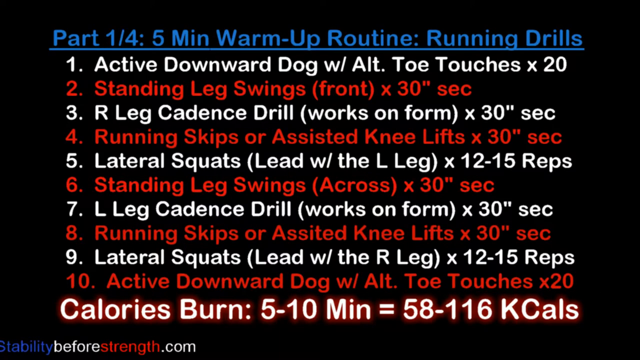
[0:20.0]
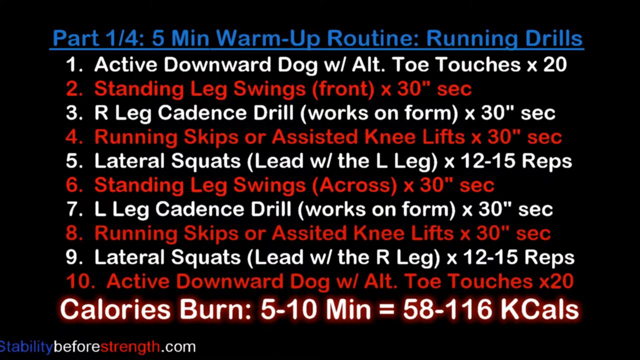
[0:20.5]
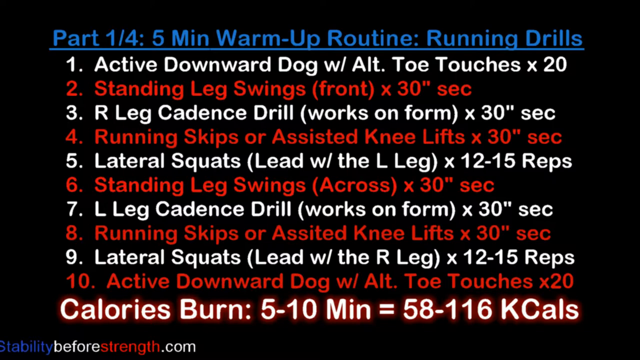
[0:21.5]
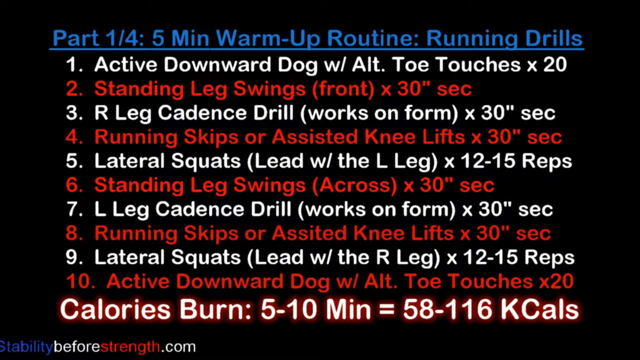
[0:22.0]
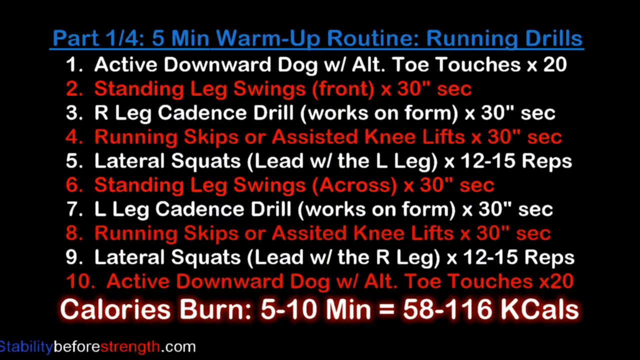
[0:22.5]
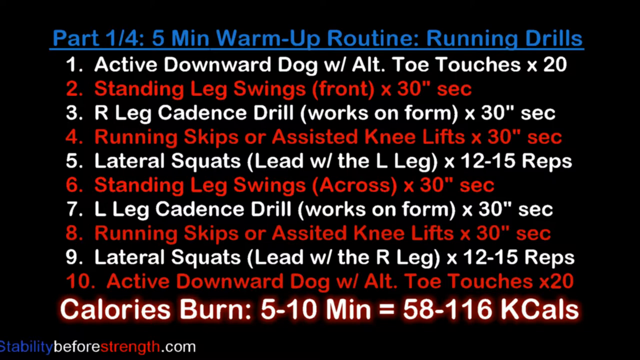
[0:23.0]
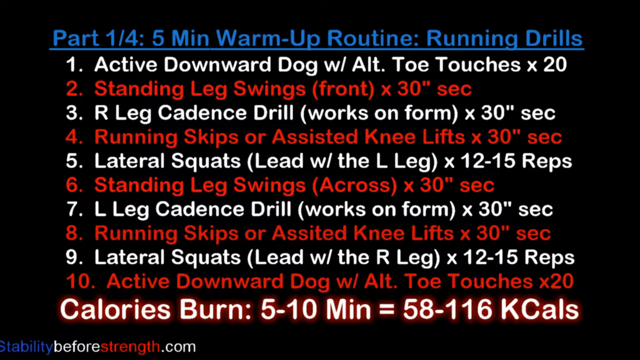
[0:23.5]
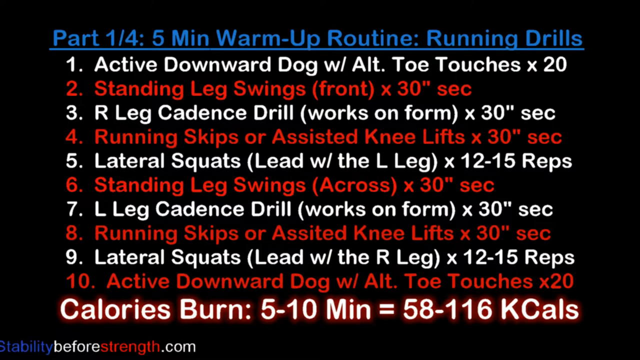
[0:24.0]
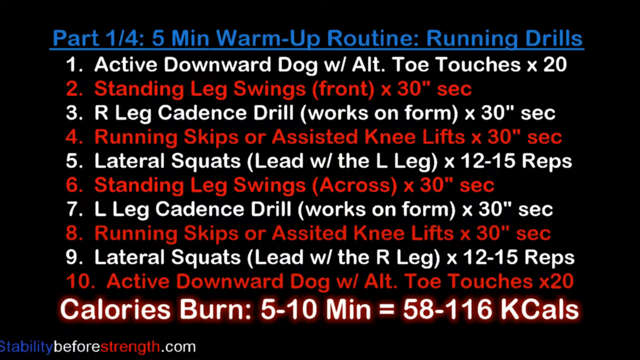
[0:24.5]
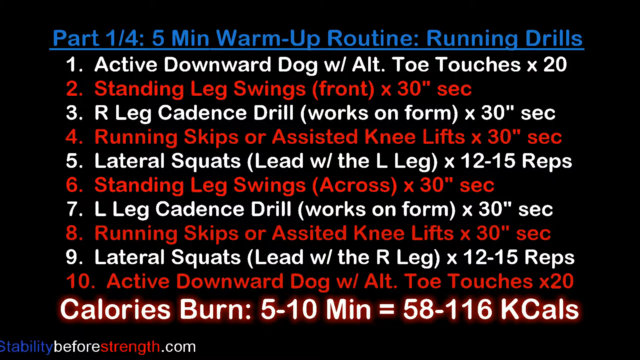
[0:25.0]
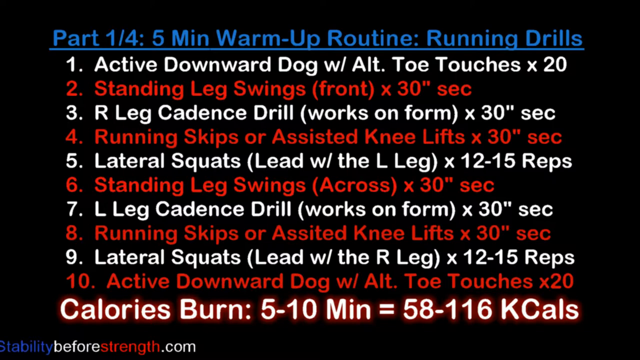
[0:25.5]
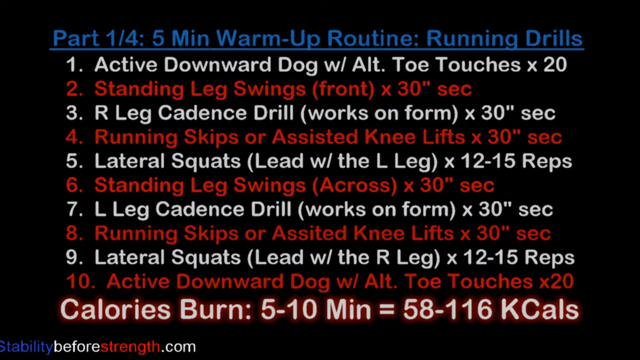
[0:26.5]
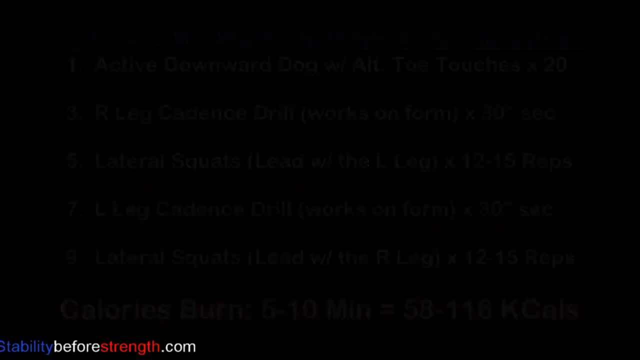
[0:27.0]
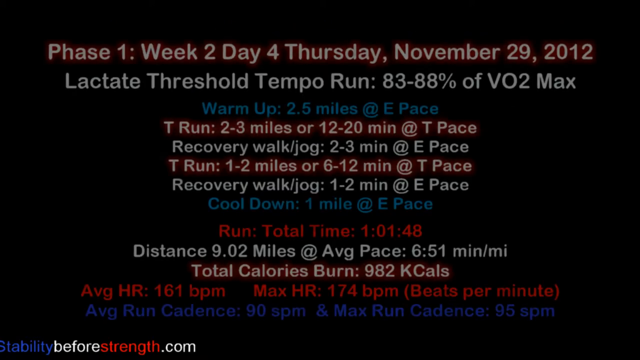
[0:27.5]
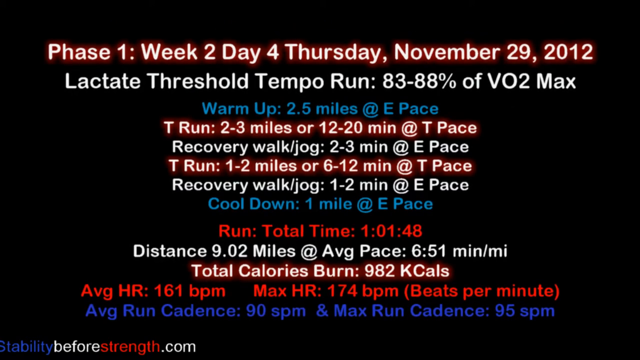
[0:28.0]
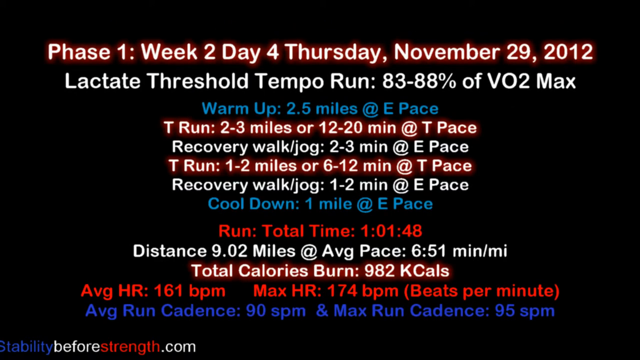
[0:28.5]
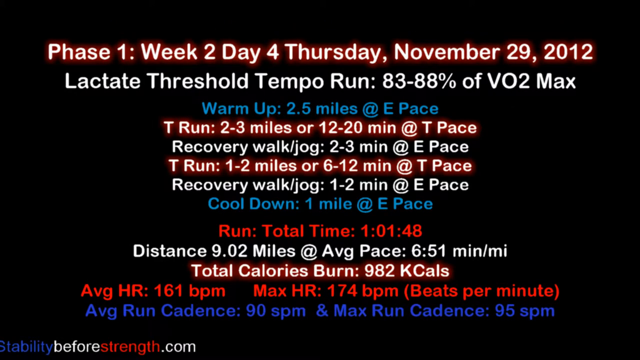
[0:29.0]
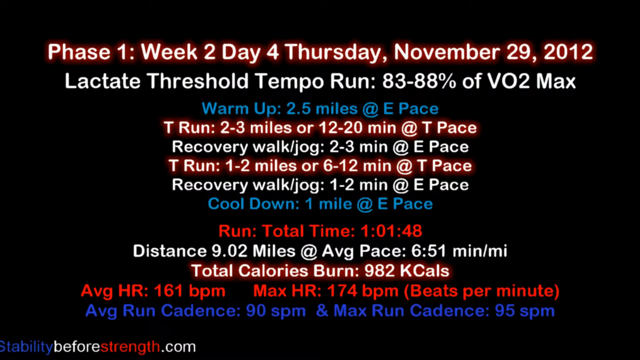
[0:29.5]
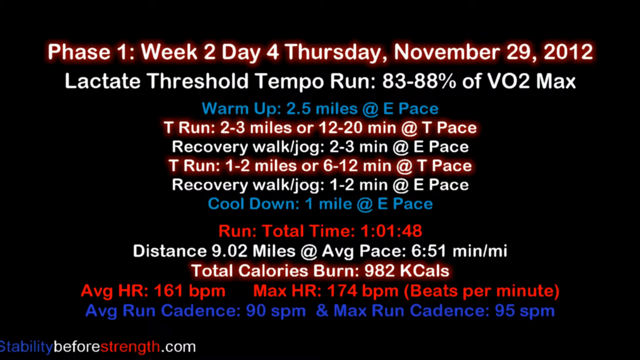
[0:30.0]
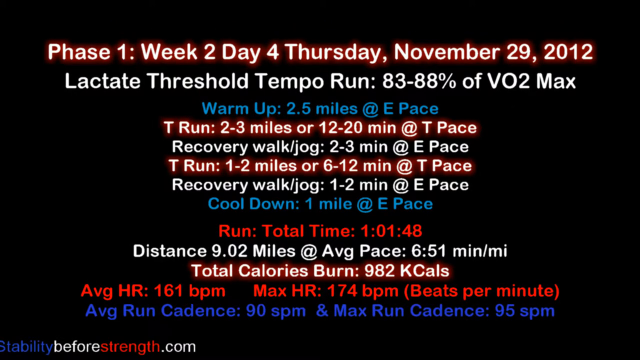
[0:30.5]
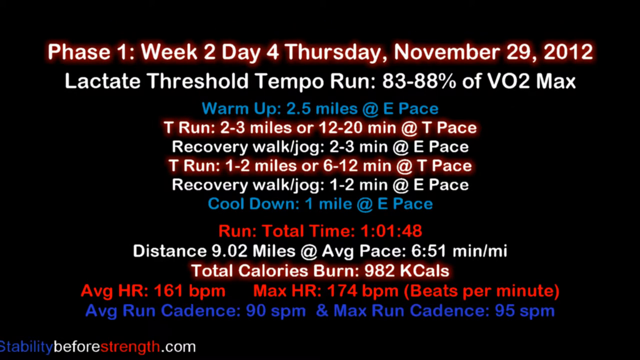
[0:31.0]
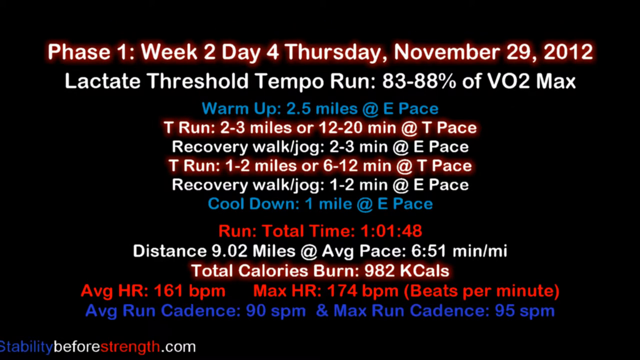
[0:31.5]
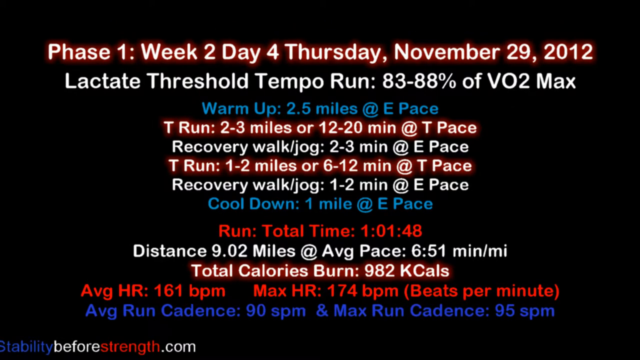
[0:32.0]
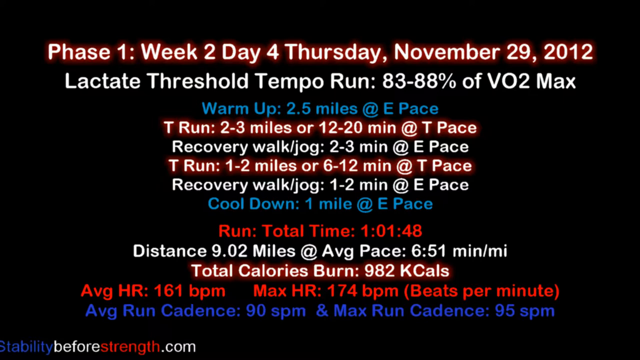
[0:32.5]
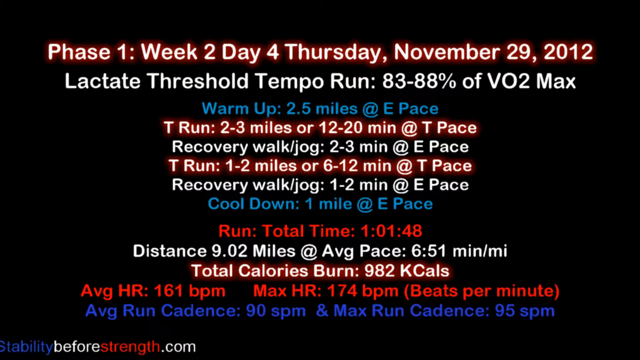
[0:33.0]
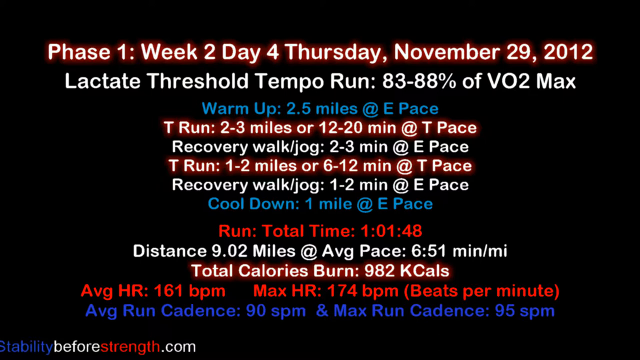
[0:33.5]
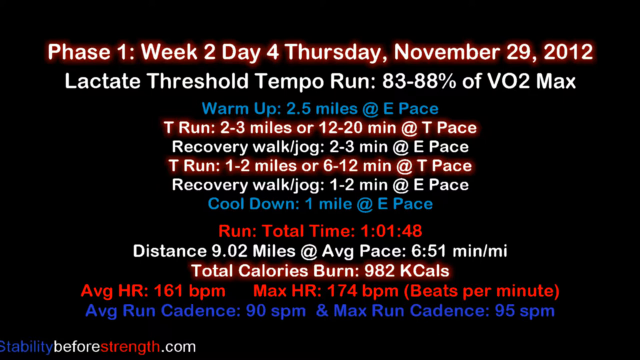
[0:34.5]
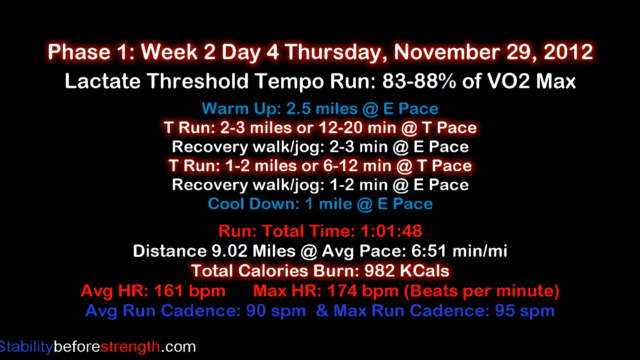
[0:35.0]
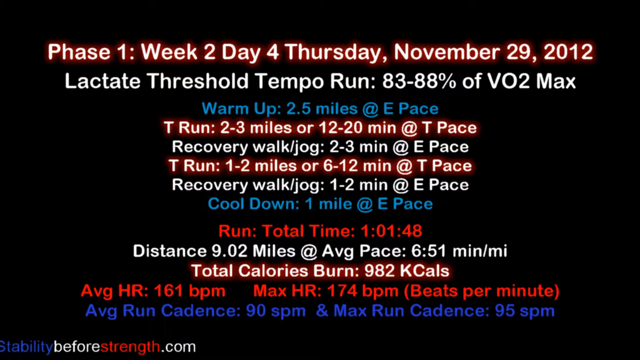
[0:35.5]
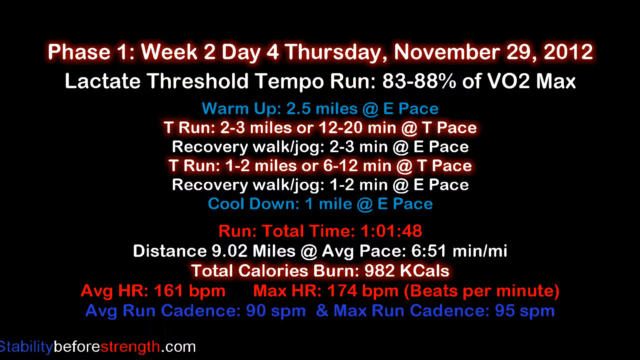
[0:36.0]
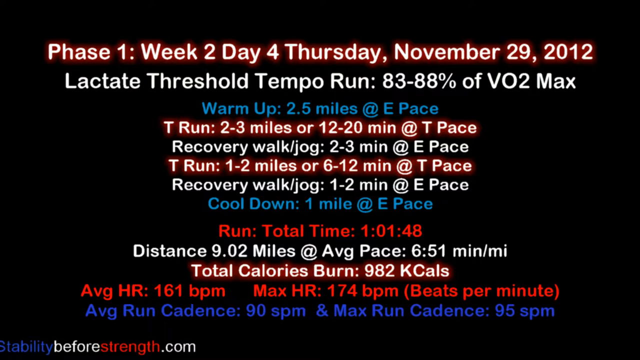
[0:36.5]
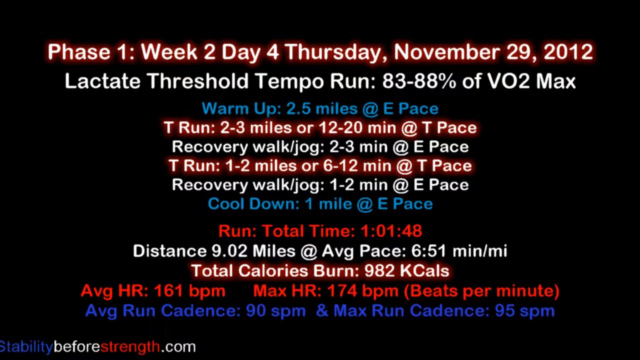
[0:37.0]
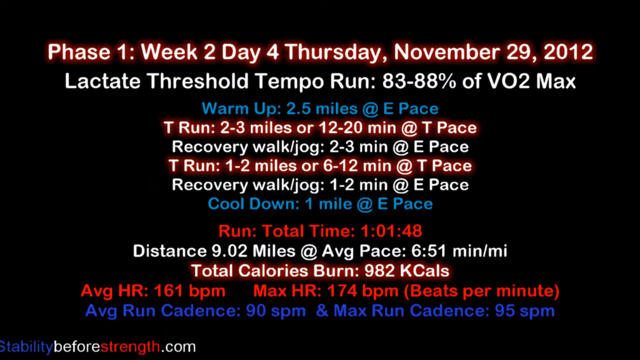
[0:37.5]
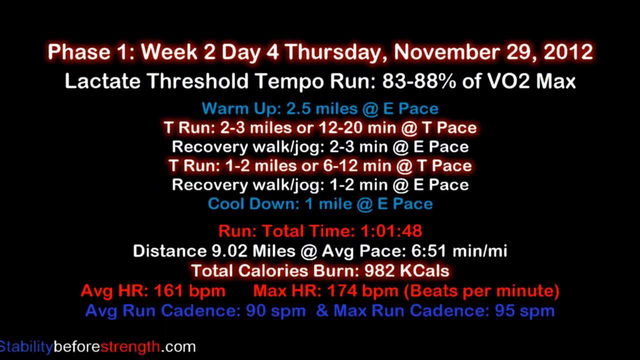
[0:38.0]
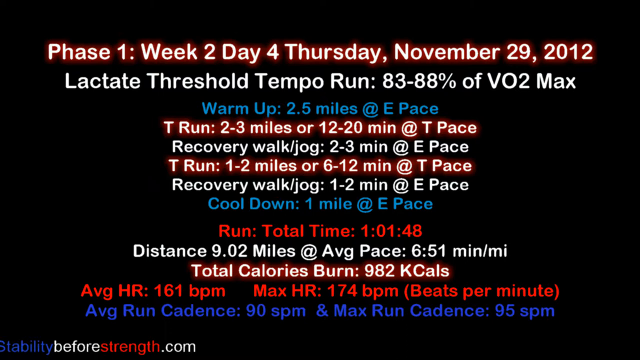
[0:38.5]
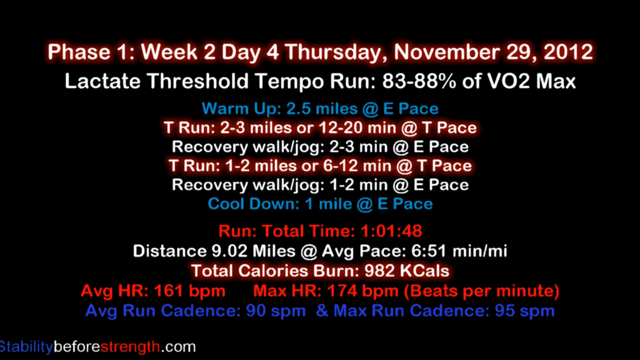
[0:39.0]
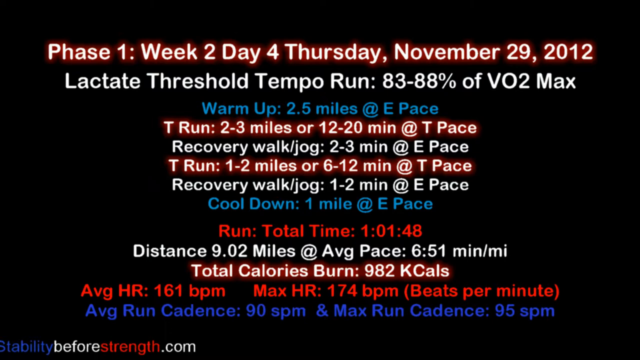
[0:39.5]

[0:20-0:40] A screen shows a routine, apparently the one the video's creator is going to demonstrate. The top part, written in blue, says "Part one of four five minute warm-up routine running drills". Underneath is a list numbered one to ten of the different exercises; the odd numbers are written in white and the even numbers in red. Information about calories burnt is at the bottom. Another screen then says "Phase one, Week two, Day four, Thursday November 29th 2012", written in white with a red glowy border. It contains lots of information about VO2max, apparently about the actual running, the tempo run, including total time, distance, average heart rate, maximum heart rate and beats per minute, with the text alternating in white, red and blue.